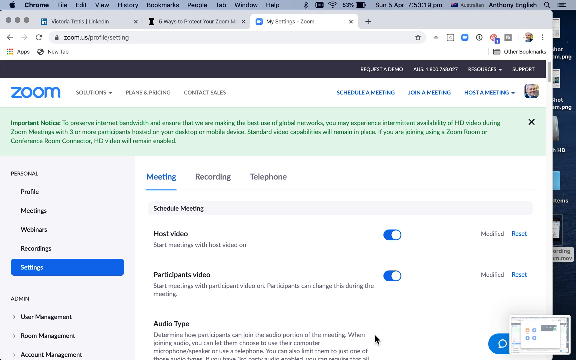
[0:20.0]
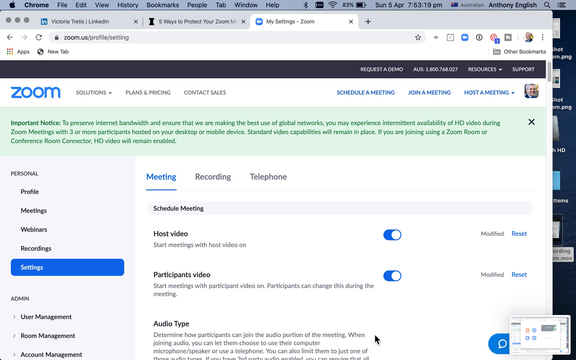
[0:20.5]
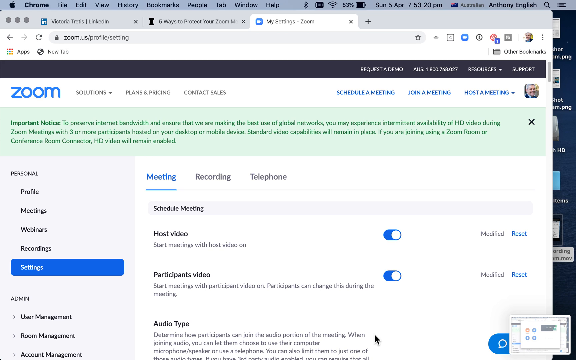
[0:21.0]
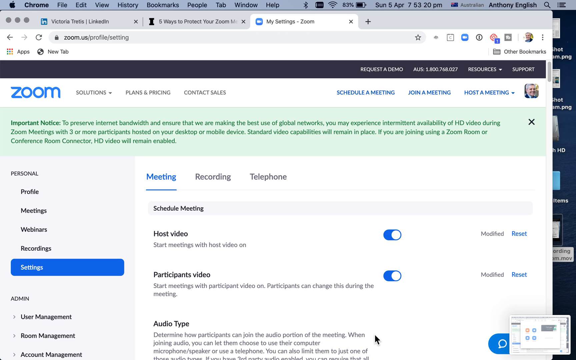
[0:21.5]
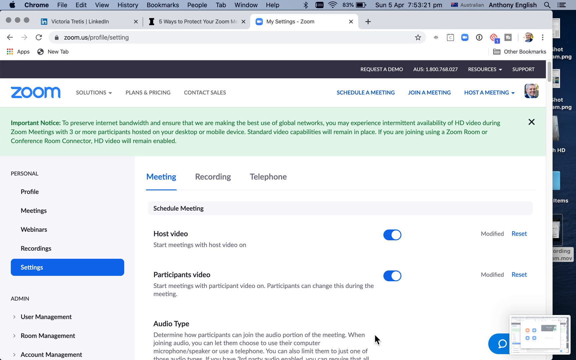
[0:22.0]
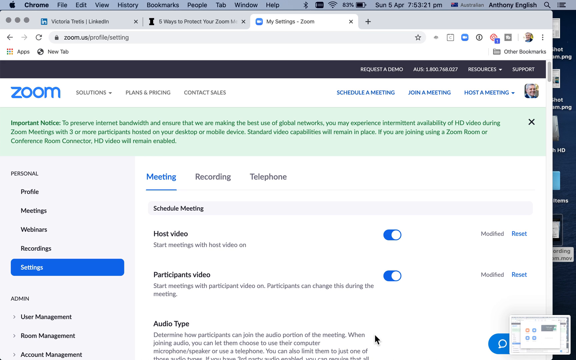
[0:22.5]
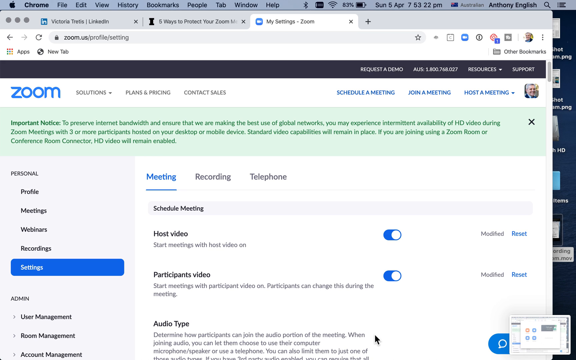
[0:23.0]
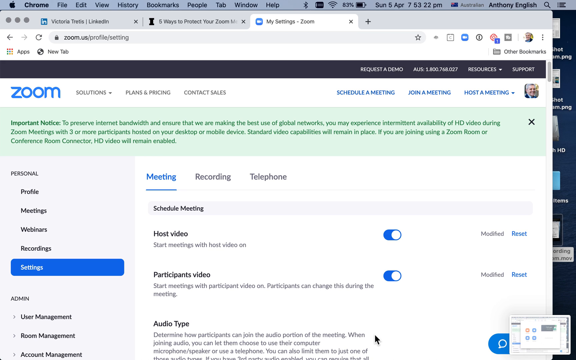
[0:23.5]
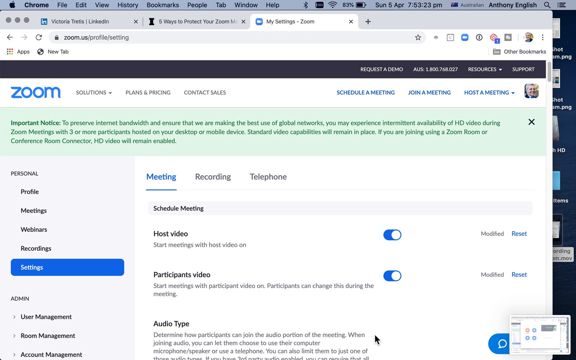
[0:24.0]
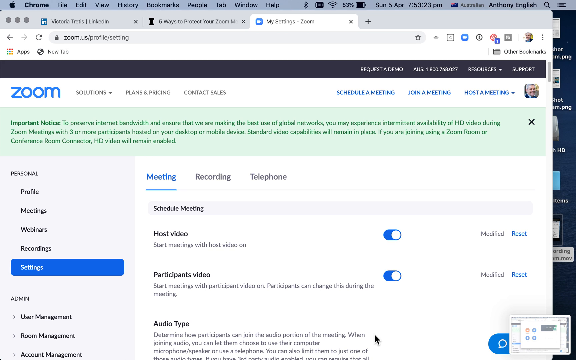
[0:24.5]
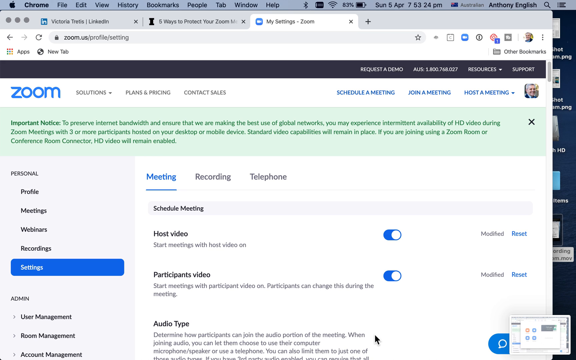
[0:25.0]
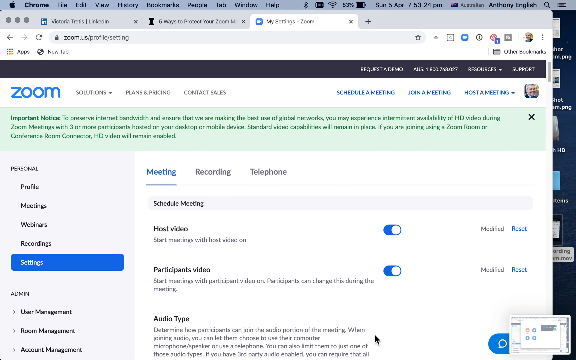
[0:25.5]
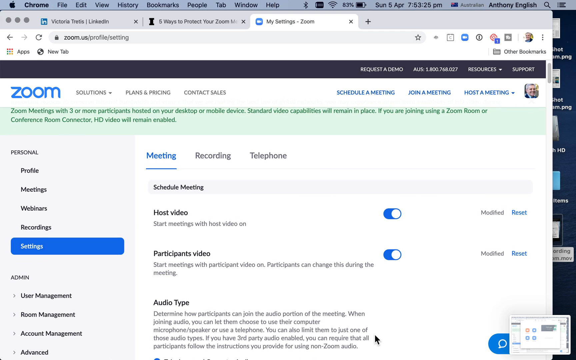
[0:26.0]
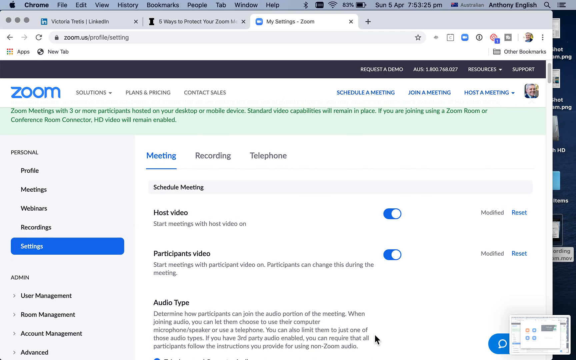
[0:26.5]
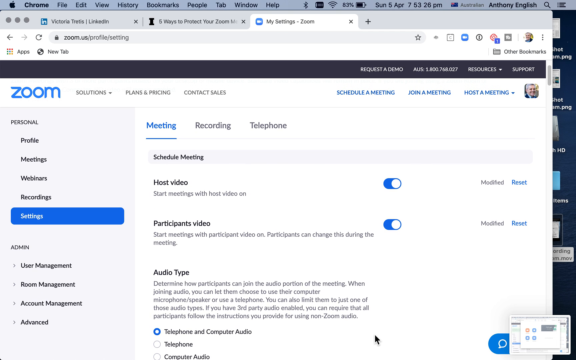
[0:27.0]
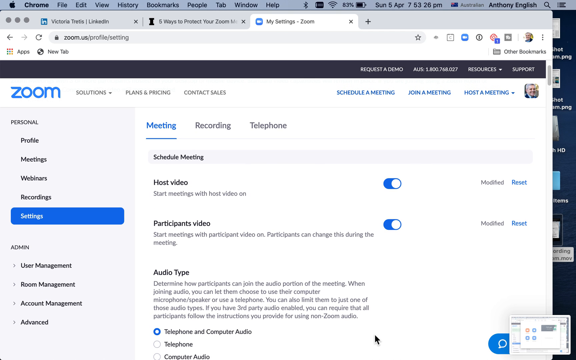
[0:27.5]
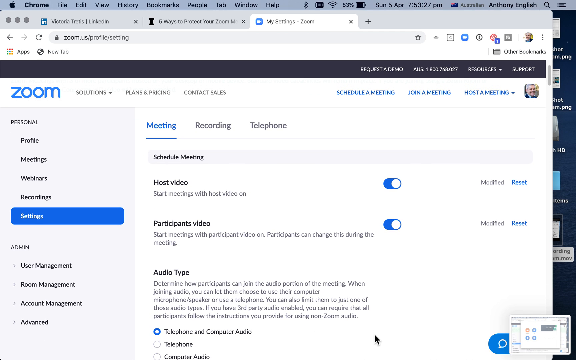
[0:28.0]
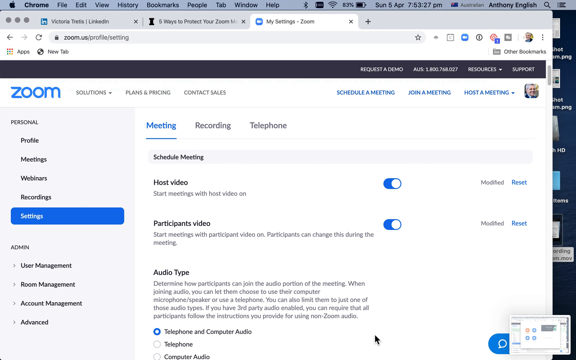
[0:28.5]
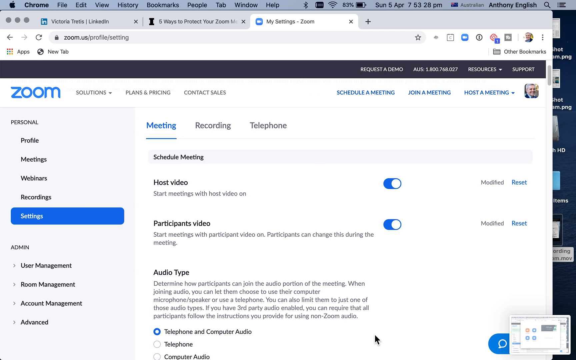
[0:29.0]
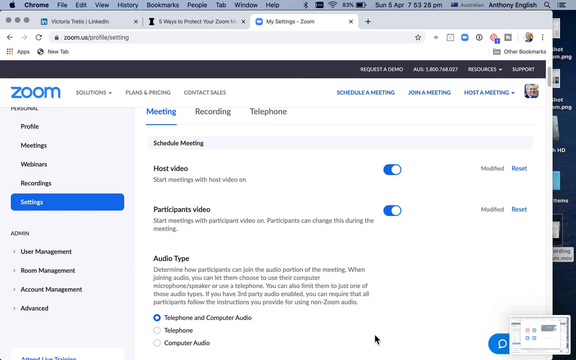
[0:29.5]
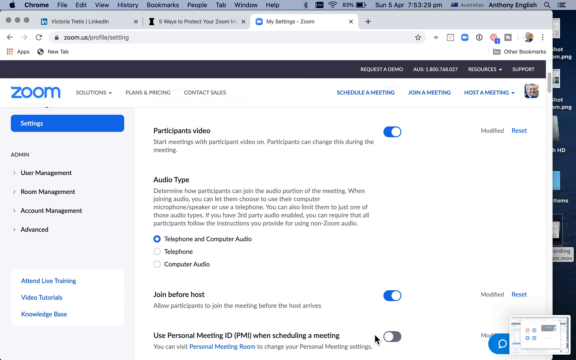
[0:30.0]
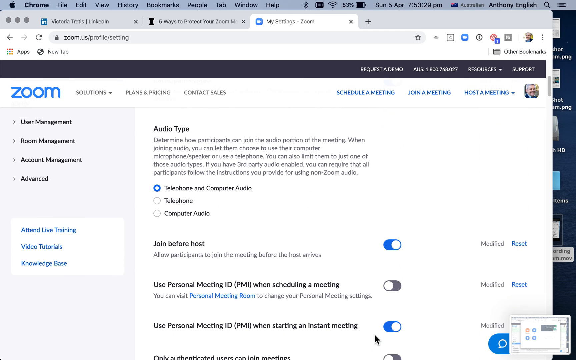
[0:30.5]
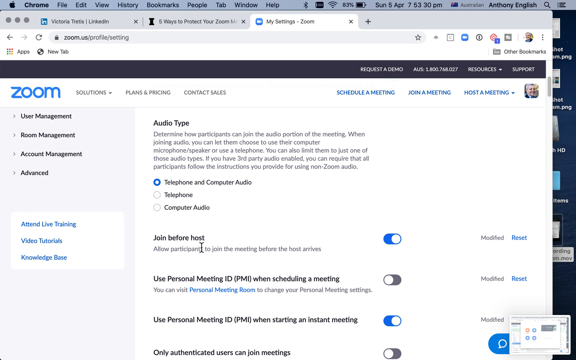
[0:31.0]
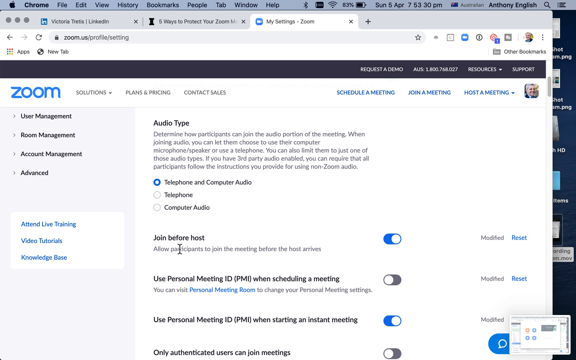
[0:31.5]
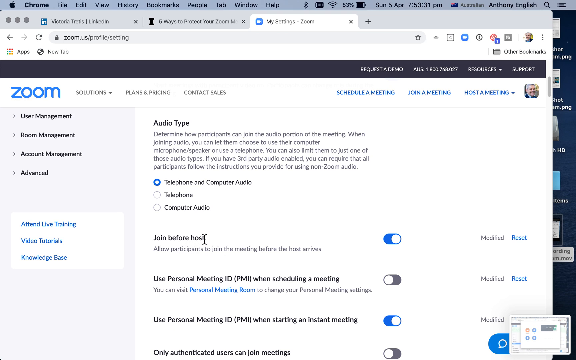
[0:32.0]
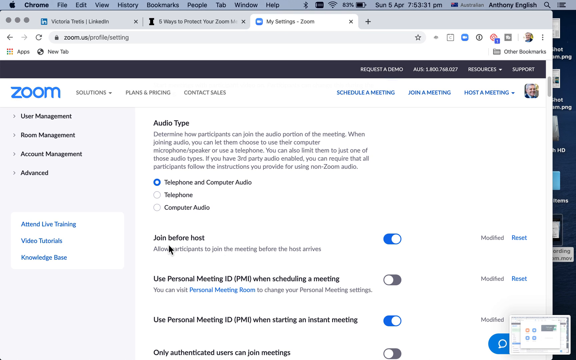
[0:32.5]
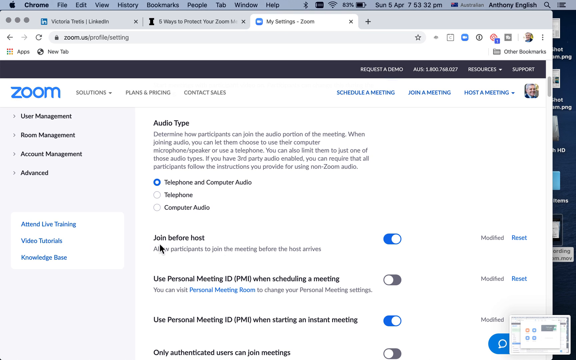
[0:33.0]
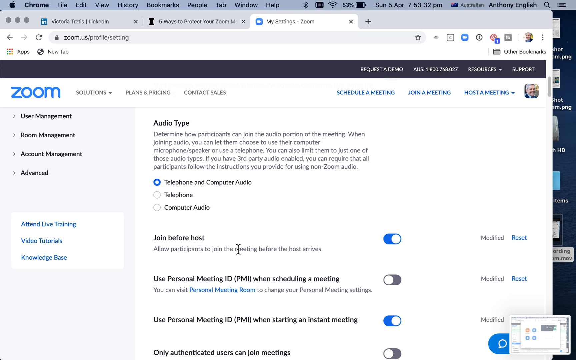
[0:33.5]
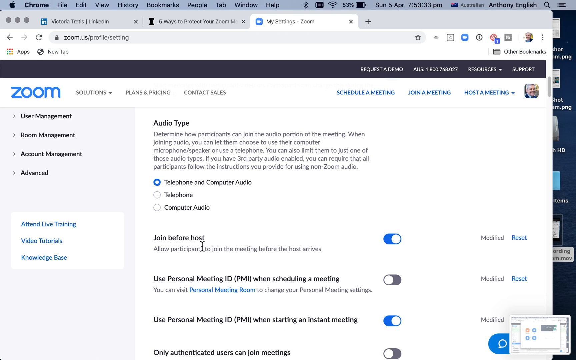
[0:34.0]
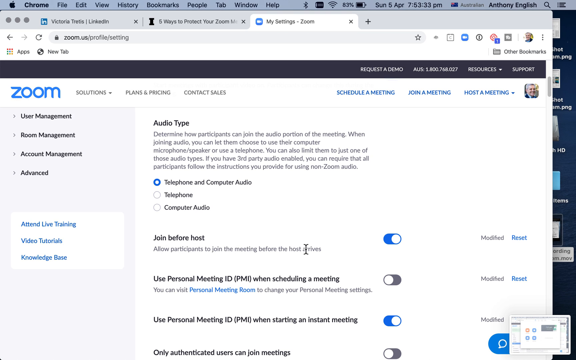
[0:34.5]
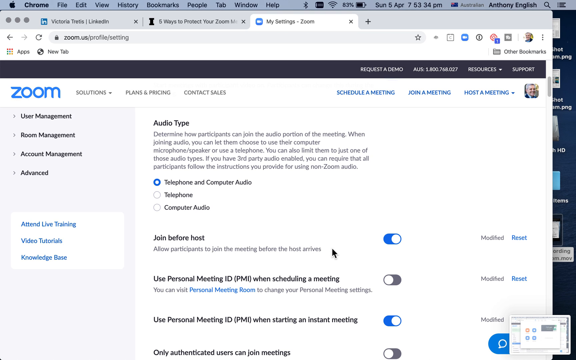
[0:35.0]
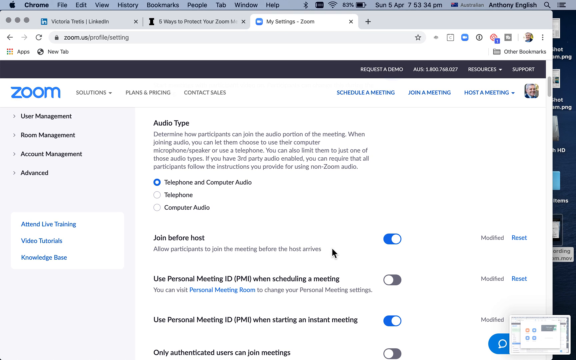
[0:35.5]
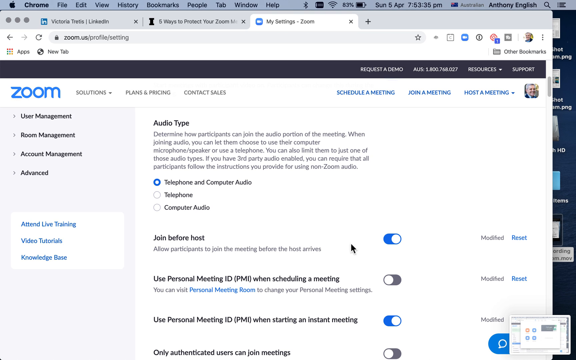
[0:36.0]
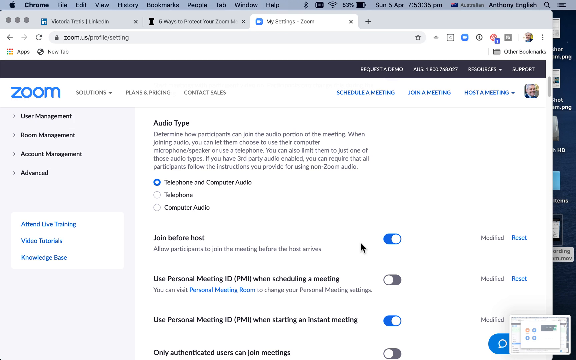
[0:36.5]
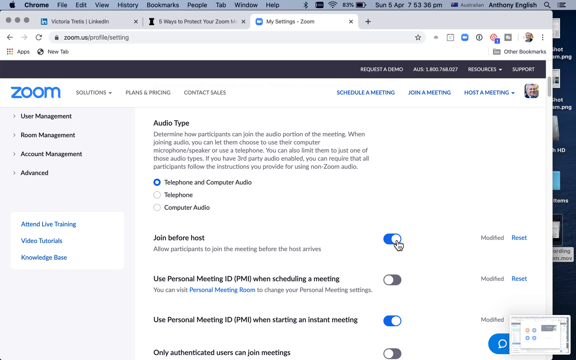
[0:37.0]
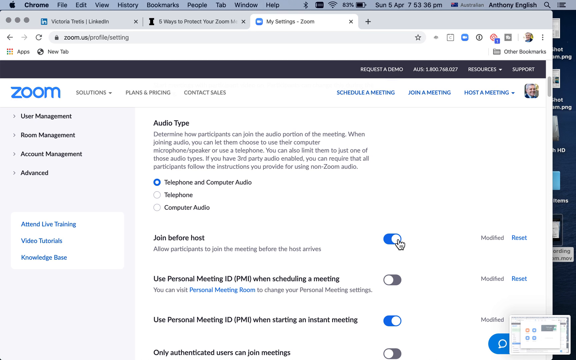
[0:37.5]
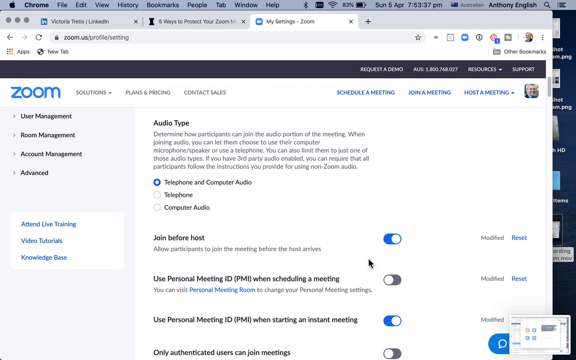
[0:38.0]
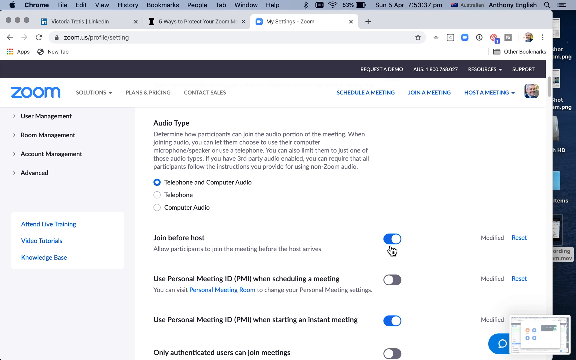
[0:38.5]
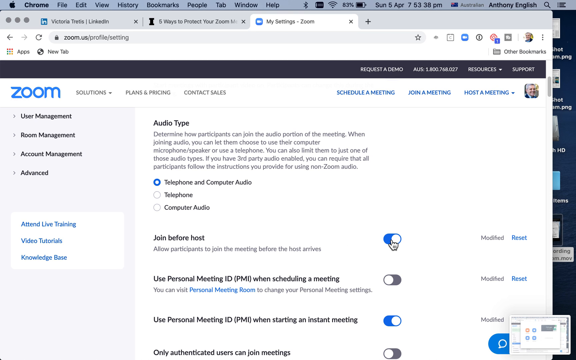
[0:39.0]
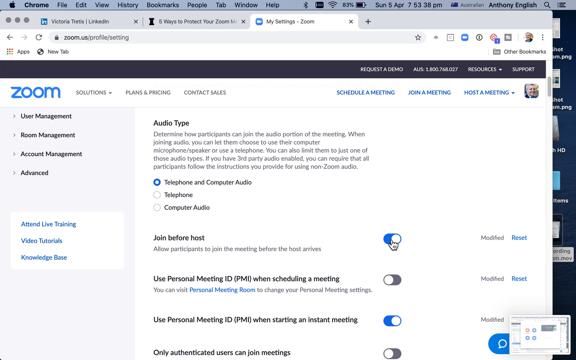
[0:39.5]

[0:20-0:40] A big screen shows the steps for going into a Zoom meeting. No people, kids or animals appear; it is just a computer showing the steps. He scrolls down to reveal what is further down the page, which shows settings for setting up the computer to join a Zoom meeting.